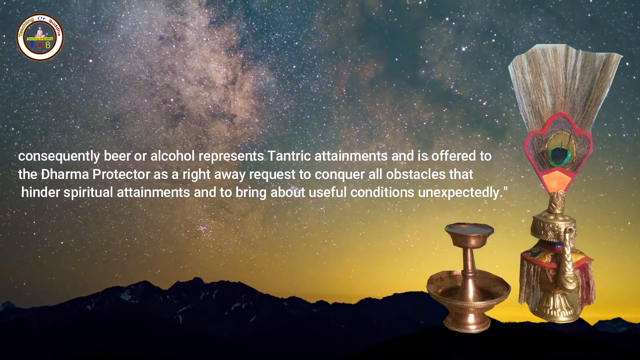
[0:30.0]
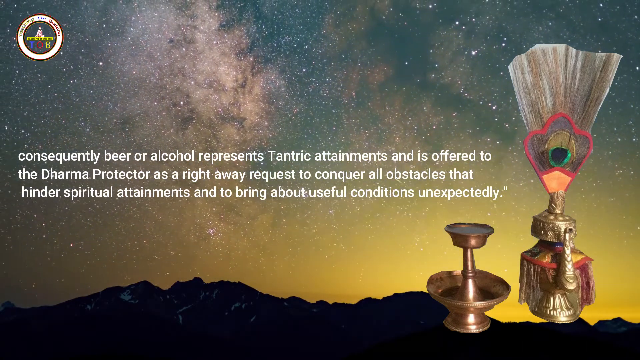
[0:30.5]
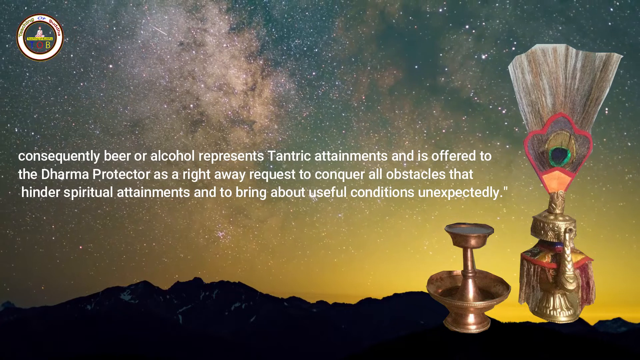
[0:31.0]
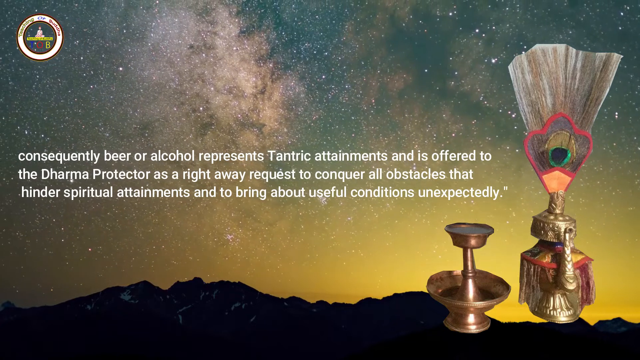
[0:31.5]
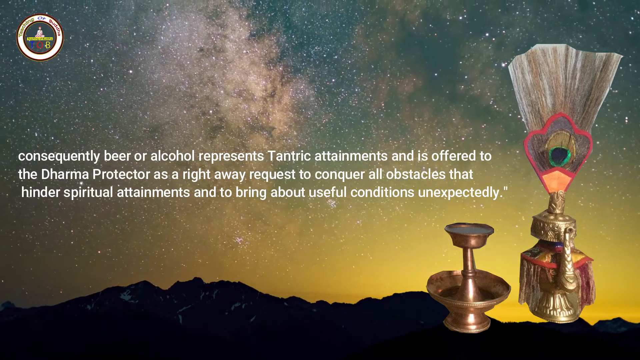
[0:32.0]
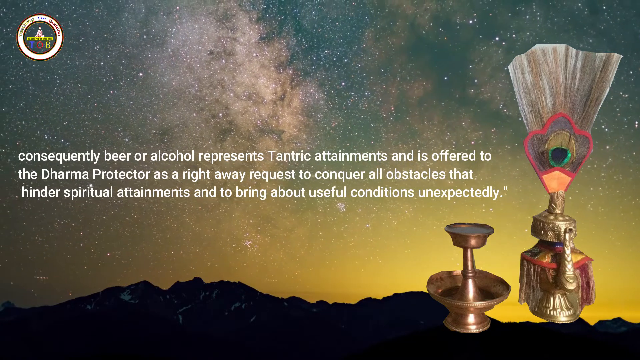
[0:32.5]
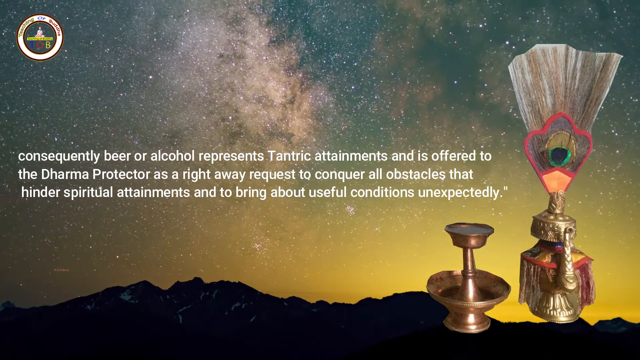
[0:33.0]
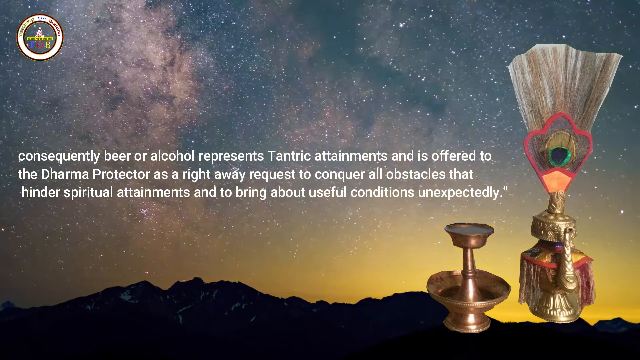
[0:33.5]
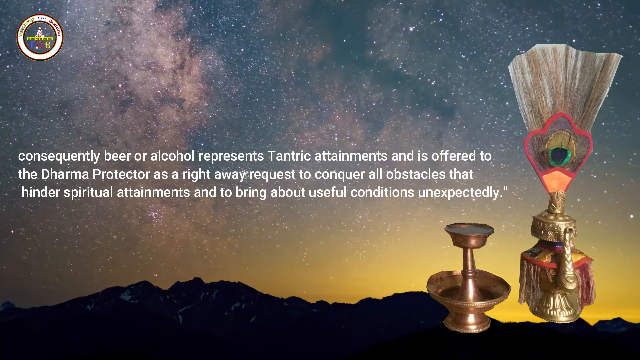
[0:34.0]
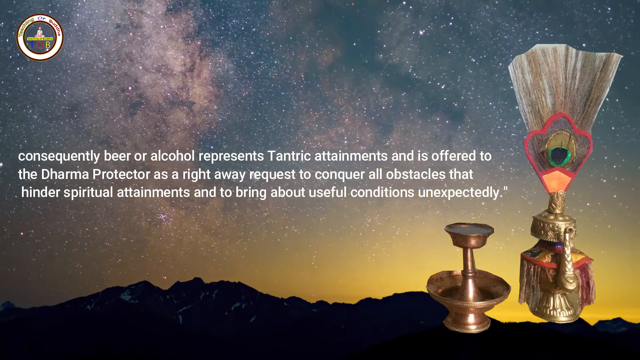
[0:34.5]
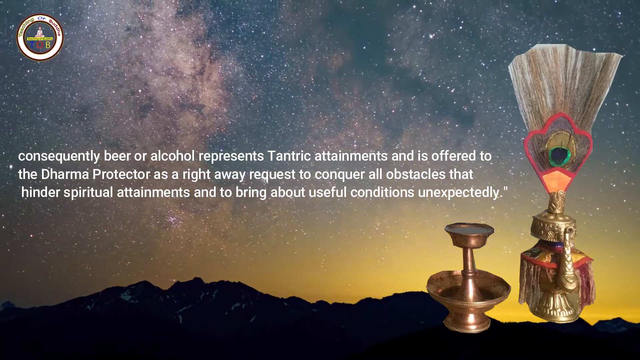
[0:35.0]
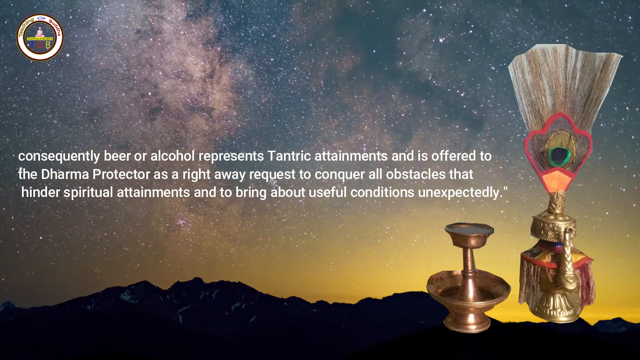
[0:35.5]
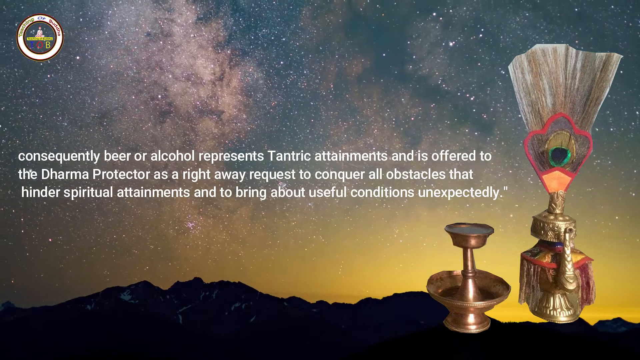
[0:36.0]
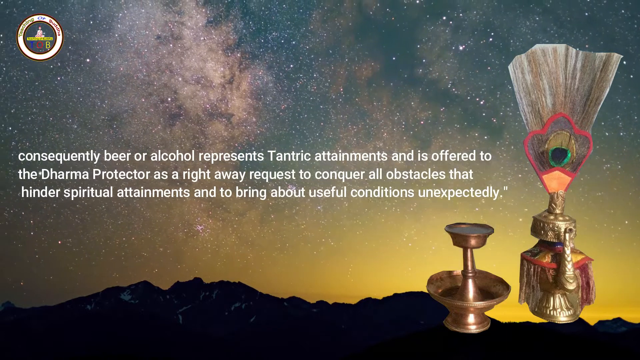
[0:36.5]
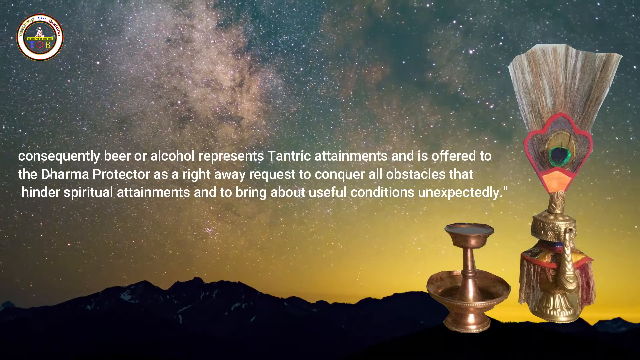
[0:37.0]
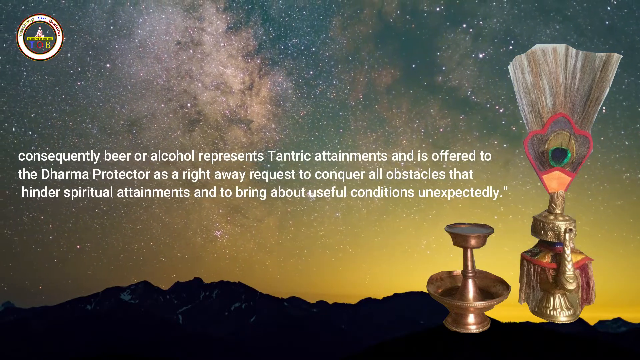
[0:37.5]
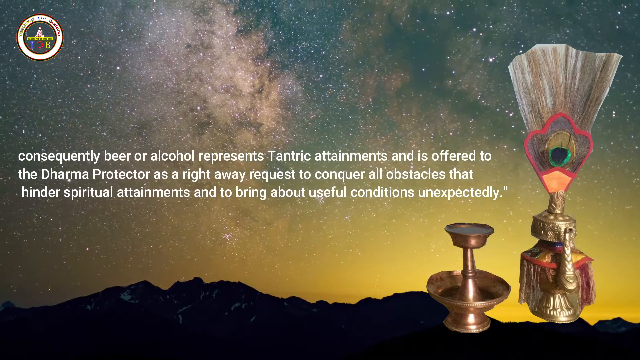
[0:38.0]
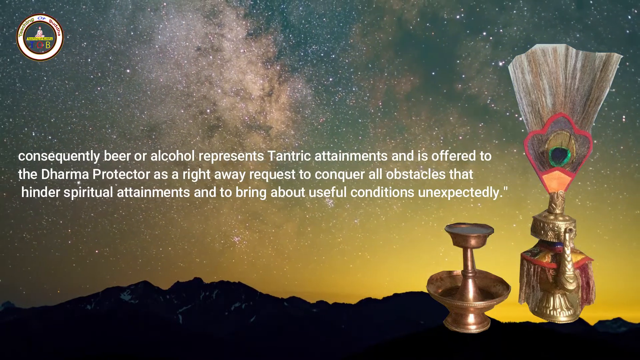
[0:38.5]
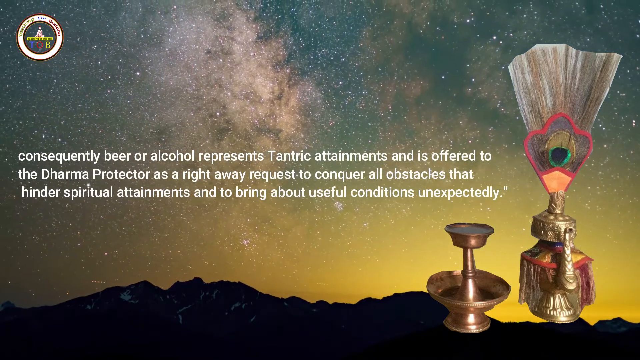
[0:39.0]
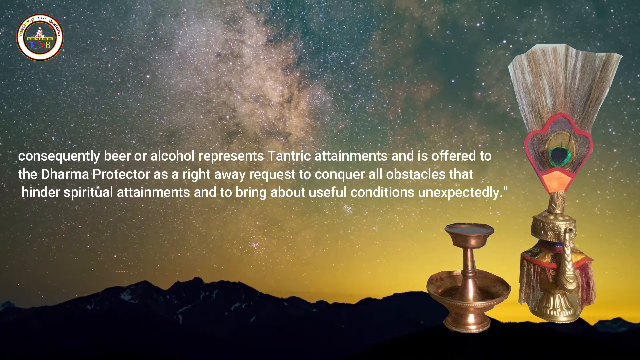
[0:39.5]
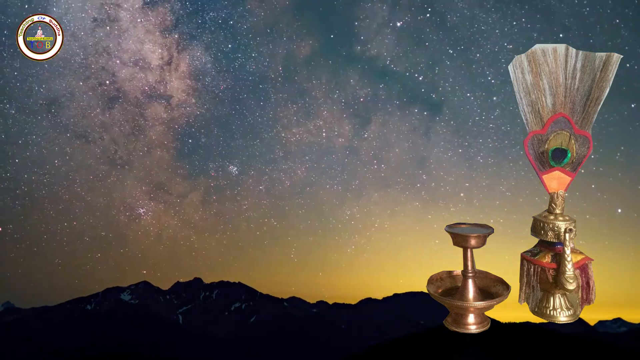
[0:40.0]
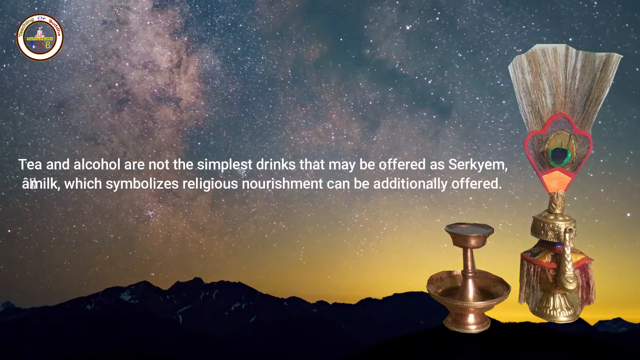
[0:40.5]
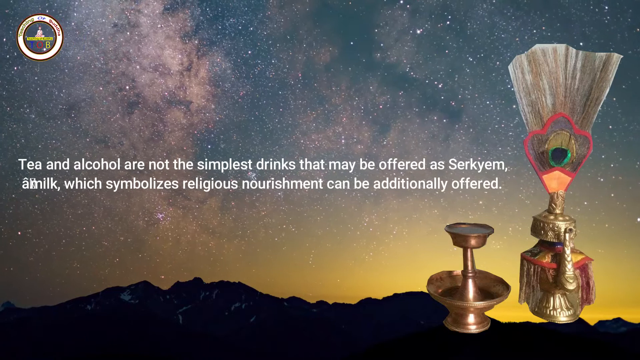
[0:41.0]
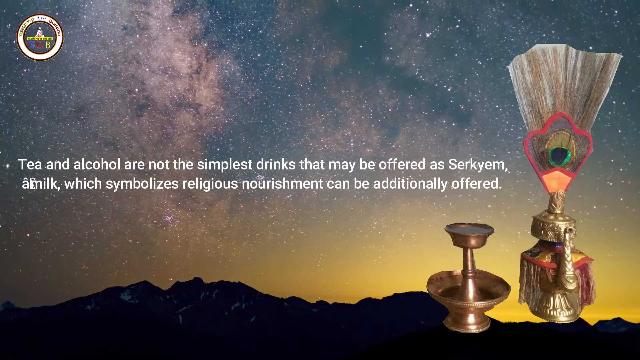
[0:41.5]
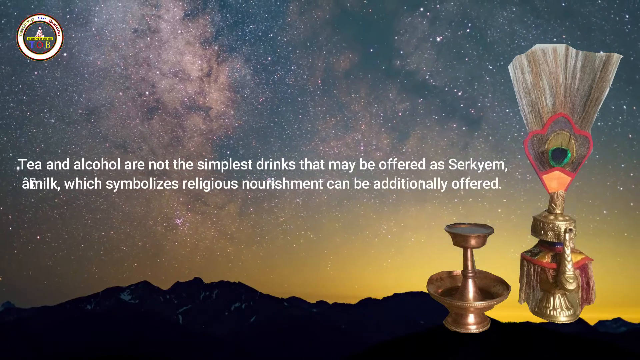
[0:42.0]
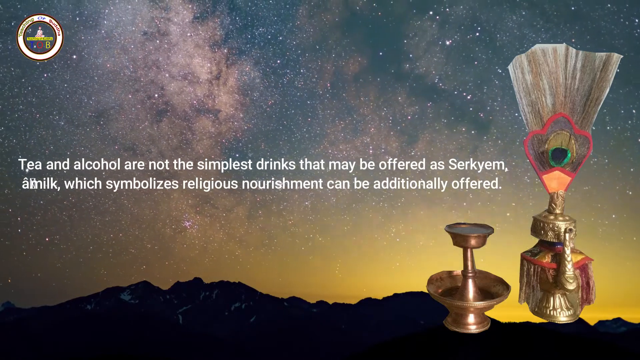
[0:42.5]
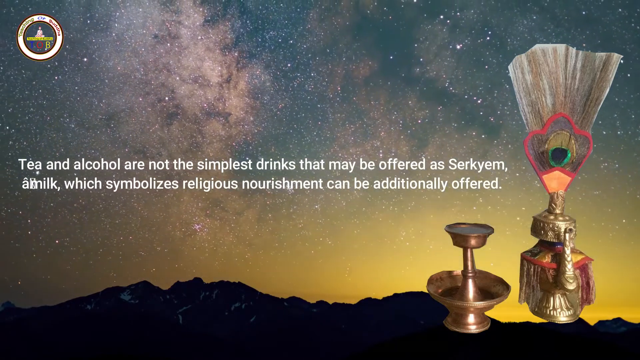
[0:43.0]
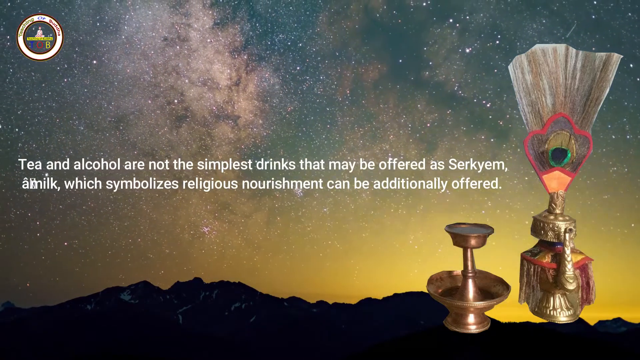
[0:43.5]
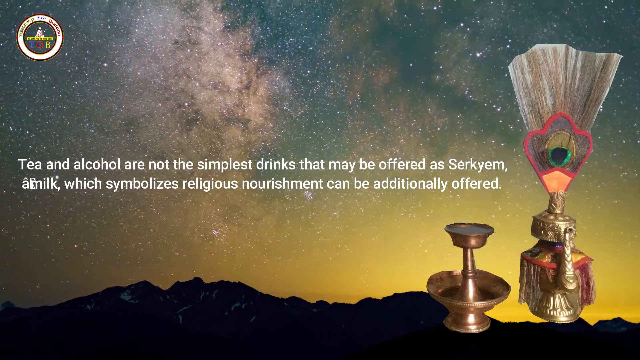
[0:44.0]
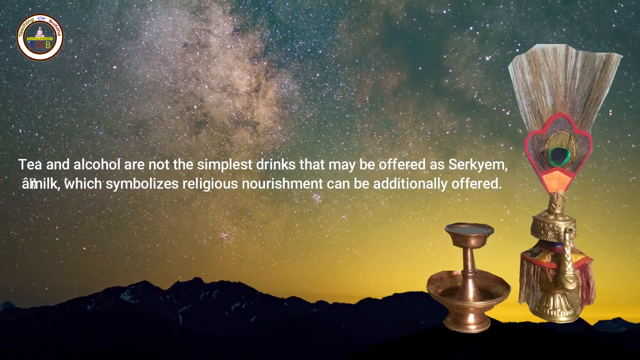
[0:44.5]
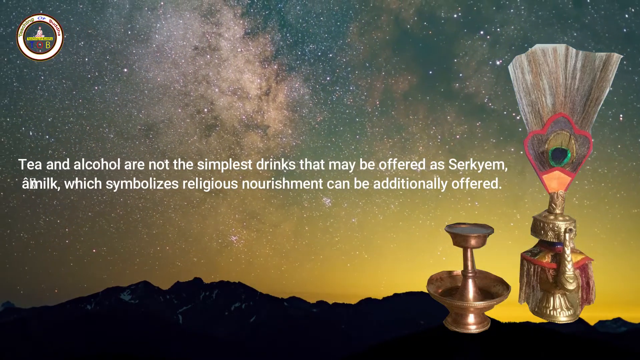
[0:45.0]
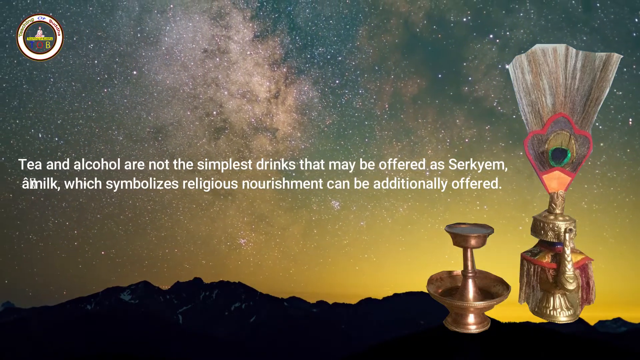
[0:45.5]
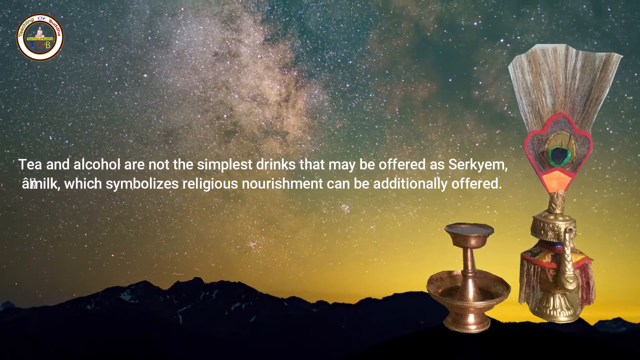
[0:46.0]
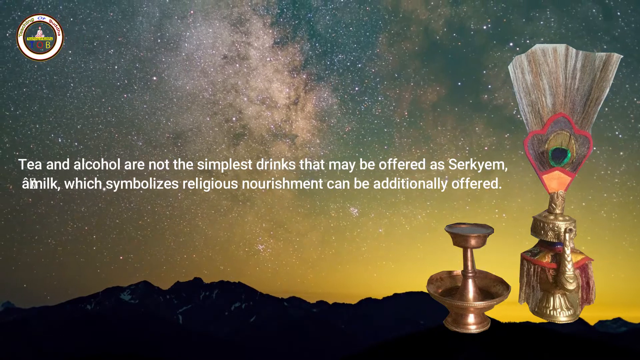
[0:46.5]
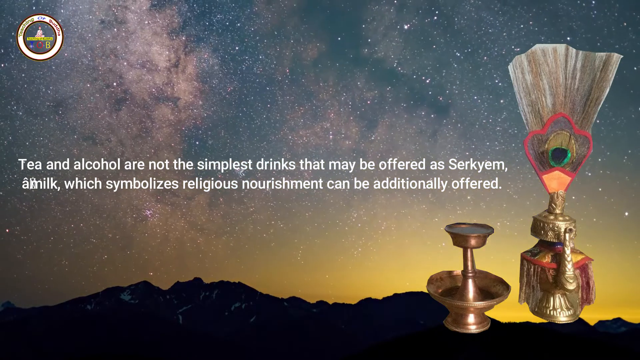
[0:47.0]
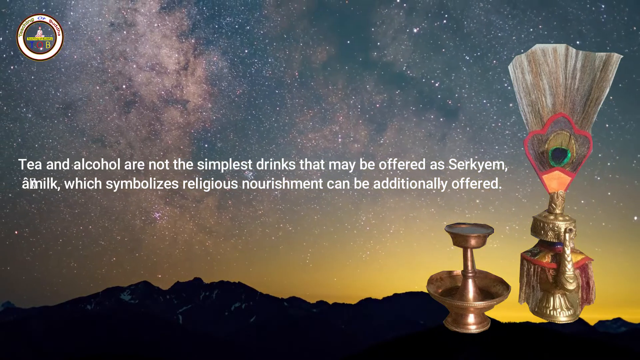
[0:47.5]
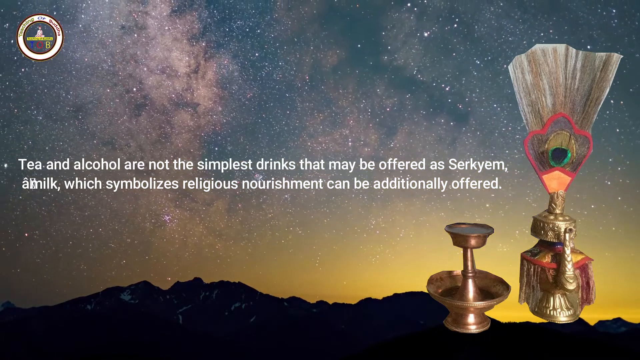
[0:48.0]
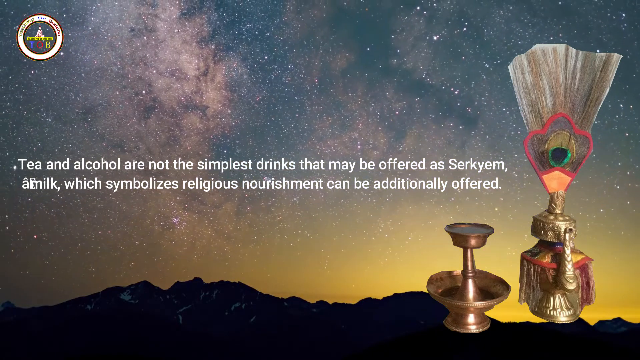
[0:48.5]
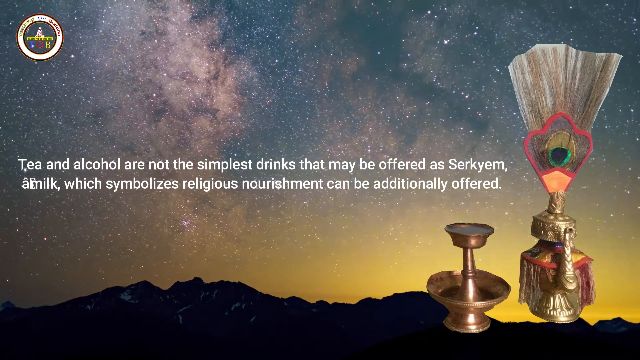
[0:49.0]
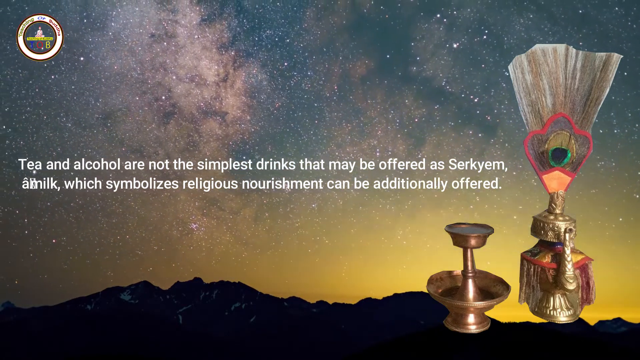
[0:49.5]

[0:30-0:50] The text stays the same, reading "Consequently beer or alcohol represents tantric attainments and is offered to the Dharma protector" and continuing "to conquer all obstacles that hinder spiritual attainments and to bring about useful conditions unexpectedly." The text then changes to "tea and alcohol are not the simplest drinks," followed by words including "milk which symbolizes religious nourishment can be additionally offered." Meanwhile the sky moves to the right and a glow lies over the mountain range. About two shooting stars appear in rapid succession on the right side of the image and near the mountain peak. Later a pop-up bubble appears at the bottom center reading "teachings of Buddha", with a subscribe button and an alarm icon.